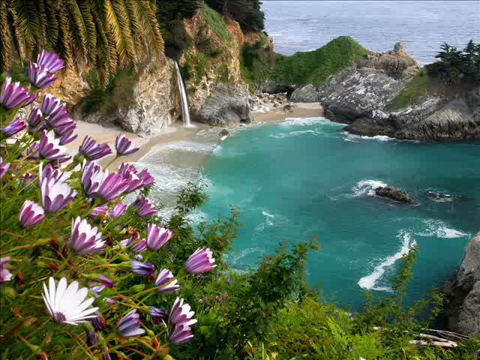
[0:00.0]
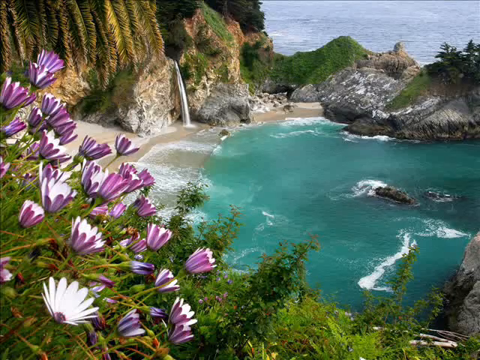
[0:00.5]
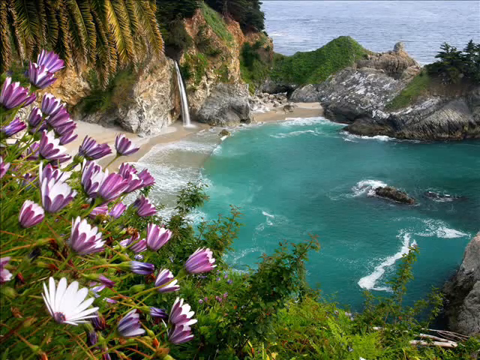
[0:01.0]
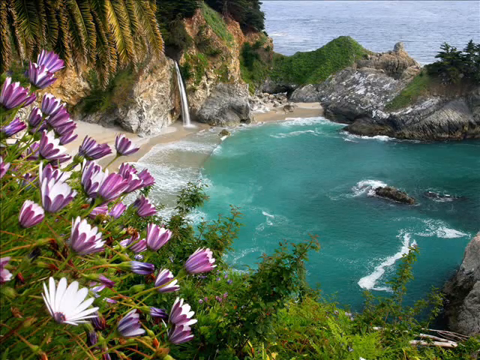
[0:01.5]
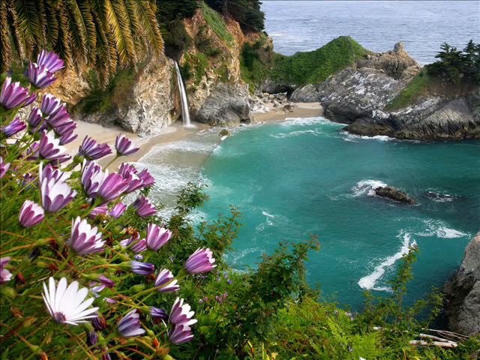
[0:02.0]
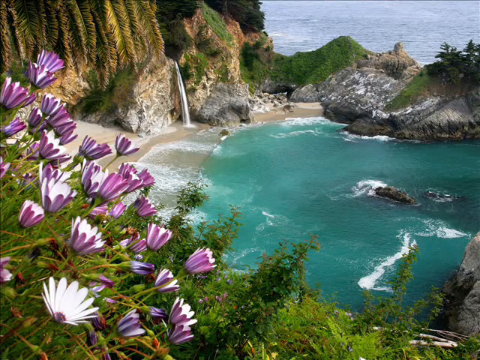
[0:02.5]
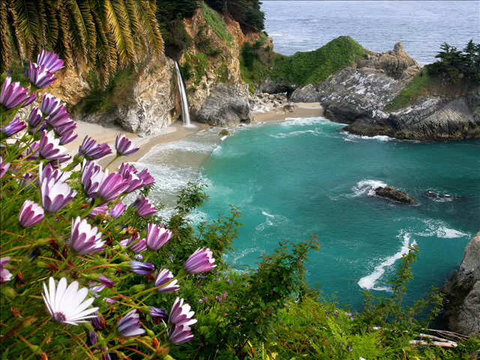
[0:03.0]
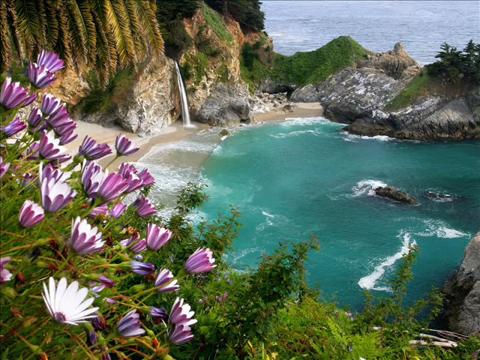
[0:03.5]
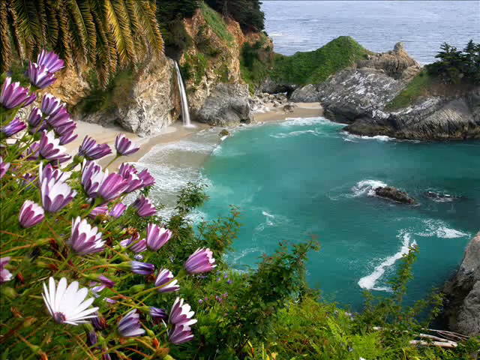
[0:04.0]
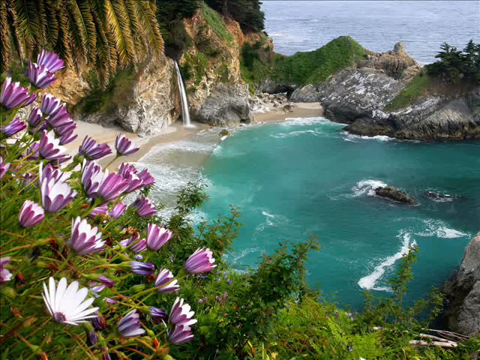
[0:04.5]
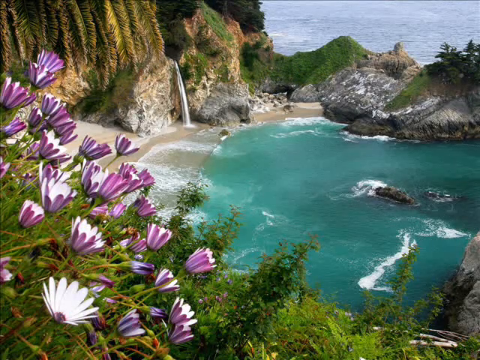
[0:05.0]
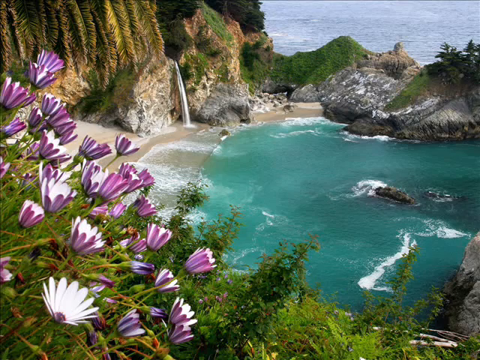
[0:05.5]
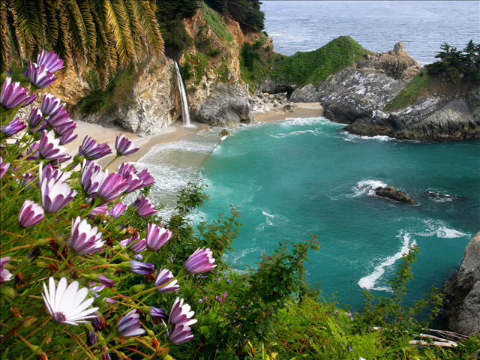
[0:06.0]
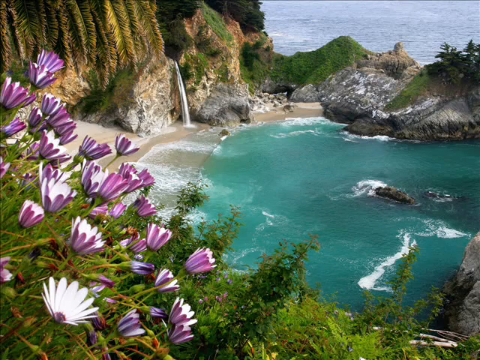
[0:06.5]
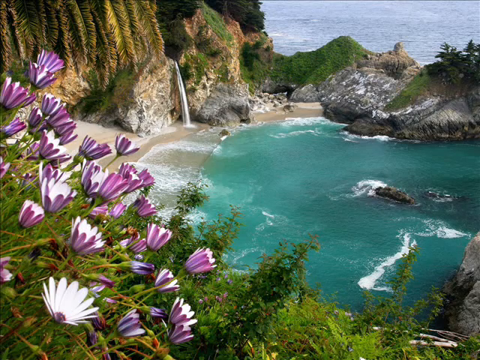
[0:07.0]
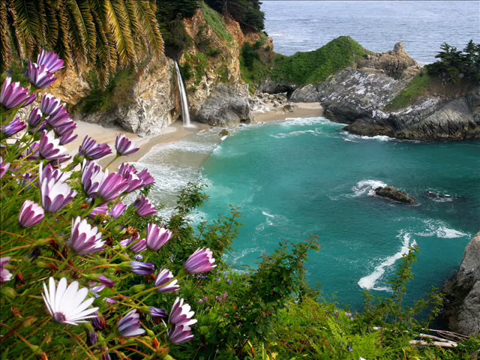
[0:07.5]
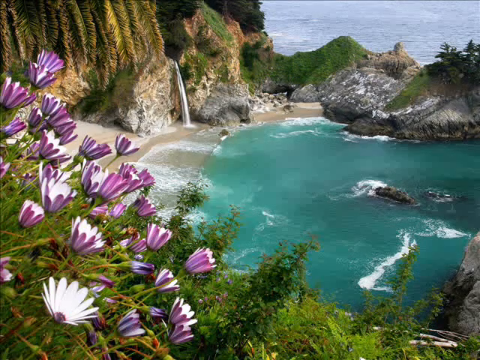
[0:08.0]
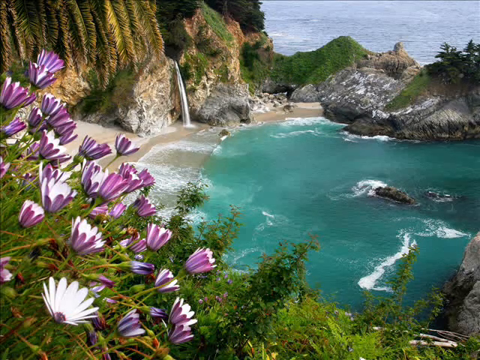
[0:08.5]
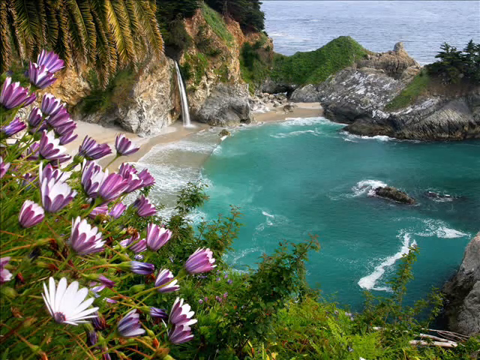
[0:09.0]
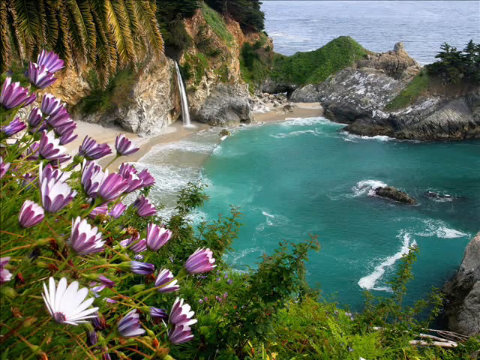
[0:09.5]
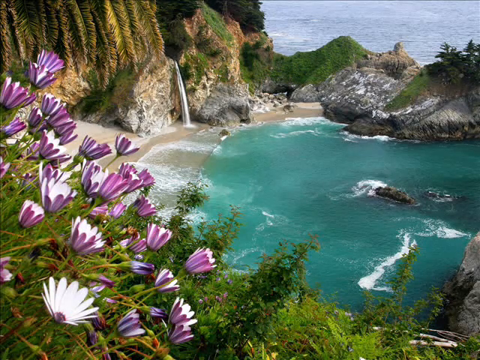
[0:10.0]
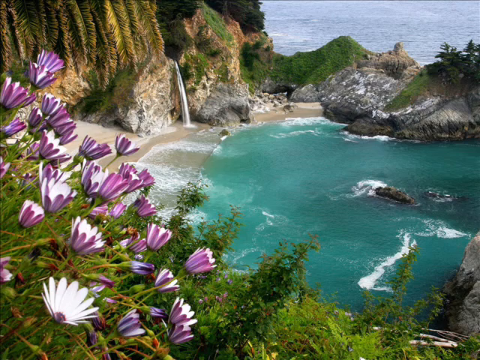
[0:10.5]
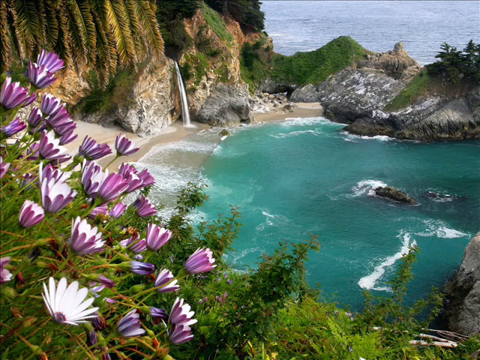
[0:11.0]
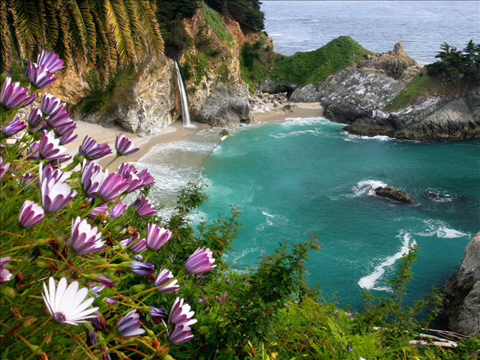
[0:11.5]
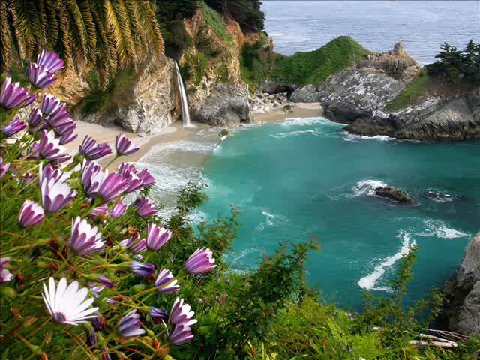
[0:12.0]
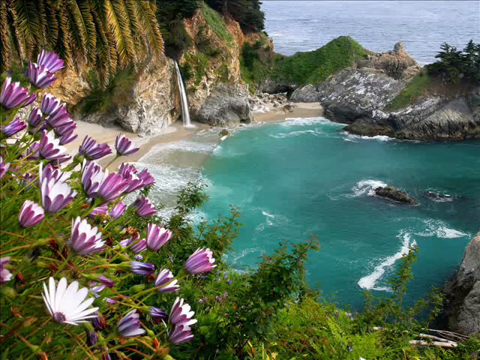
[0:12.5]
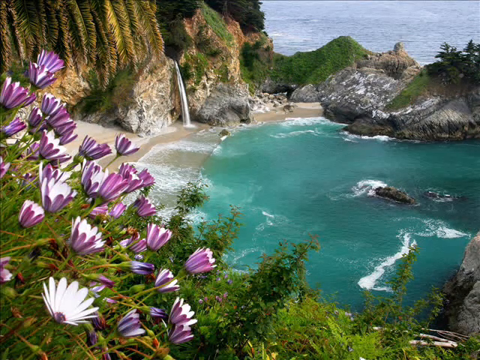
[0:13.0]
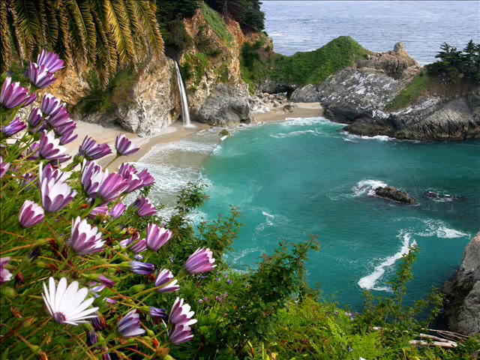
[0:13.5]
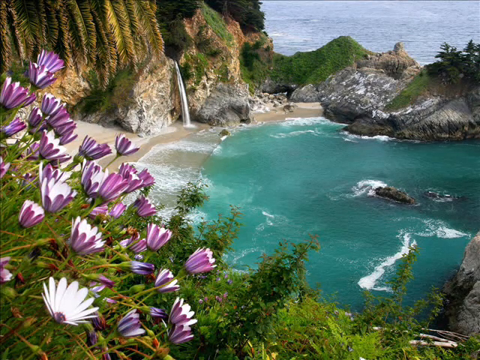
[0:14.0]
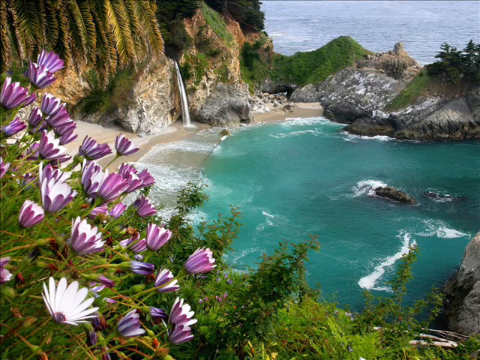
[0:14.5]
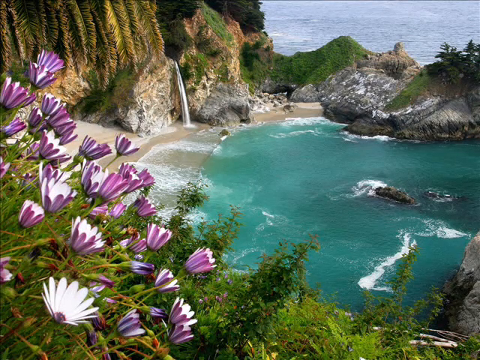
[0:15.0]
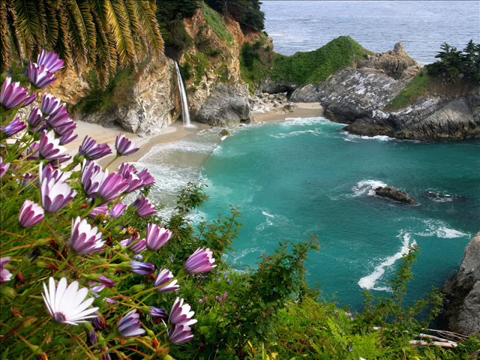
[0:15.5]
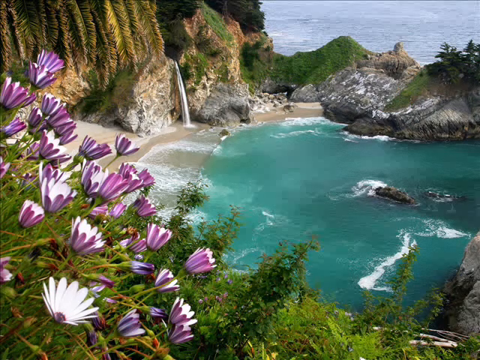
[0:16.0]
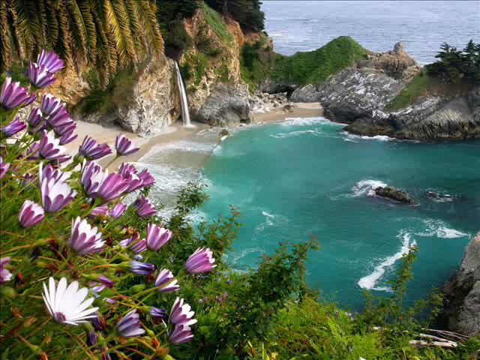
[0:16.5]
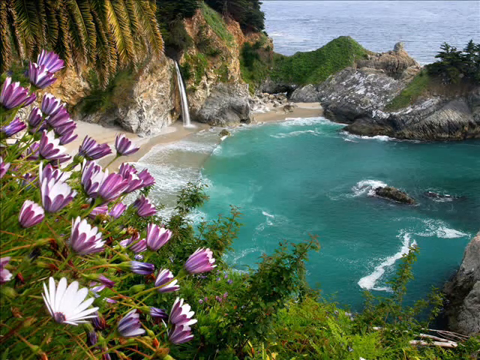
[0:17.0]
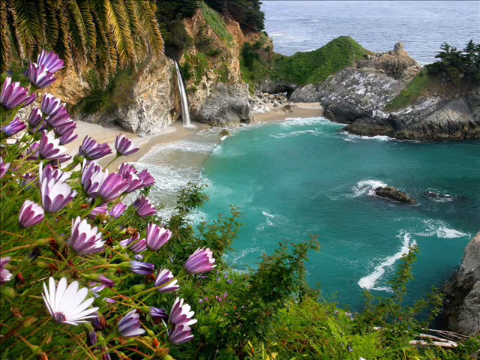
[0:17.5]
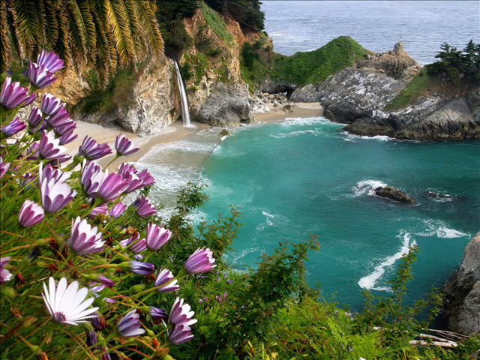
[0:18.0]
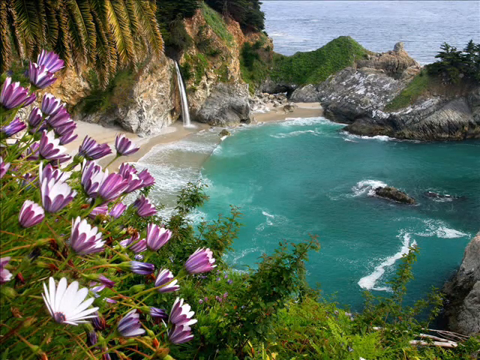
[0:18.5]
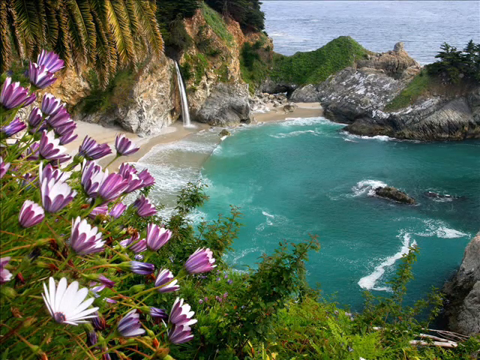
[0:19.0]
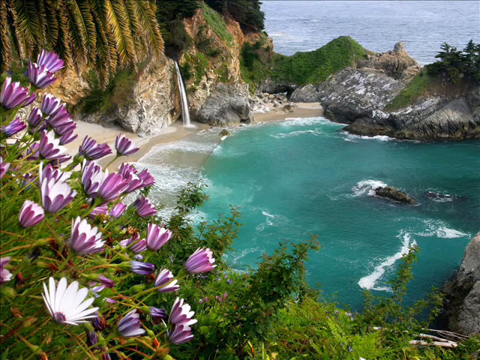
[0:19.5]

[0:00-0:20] The view looks out over a shoreline with flowers close by. Across the water is a mountainside with a small waterfall pouring water onto the beaches beside a small pool of water. The pool is sort of enclosed, with potentially just one opening where the main body of water comes in, visible in the top right of the view. The enclosed water has a darker, more greenish blue hue that looks chalky blue, unlike the dull light blue of the water outside the area. The image seems to be static and does not change at all. Near the viewer is a bunch of open flowers, most with dark purple petals on the outside and white on the insides of the petals.